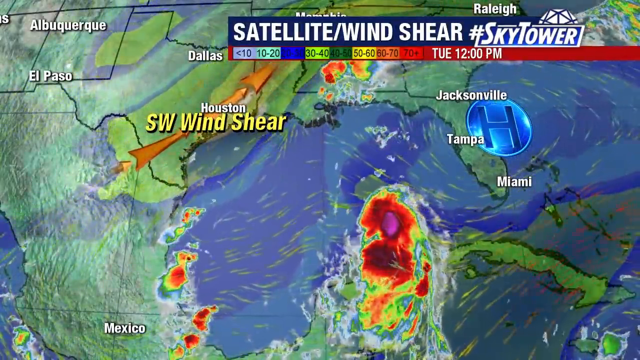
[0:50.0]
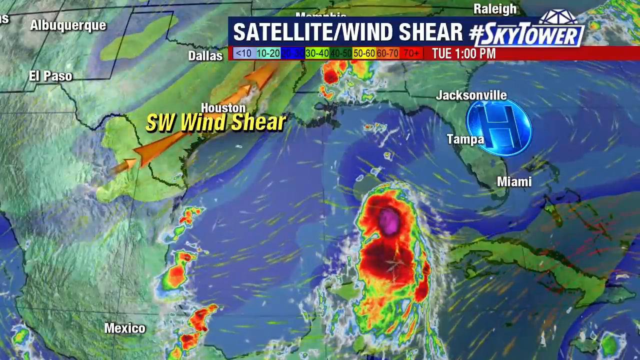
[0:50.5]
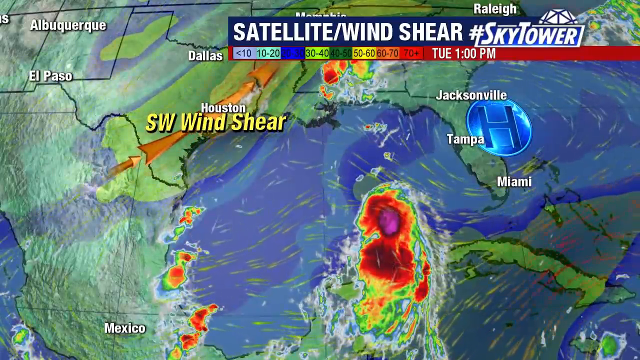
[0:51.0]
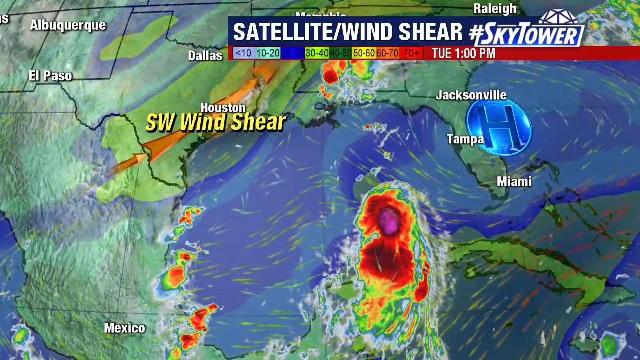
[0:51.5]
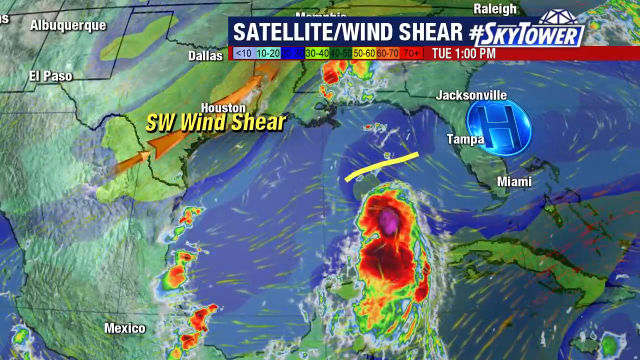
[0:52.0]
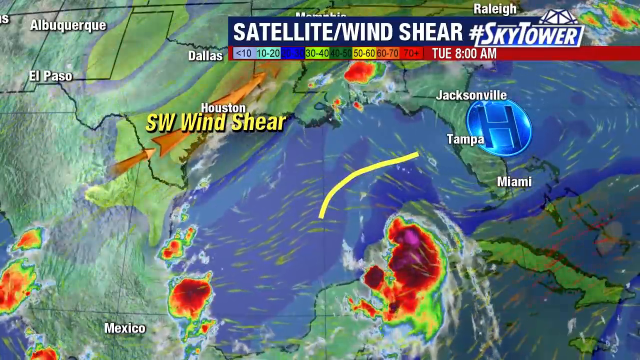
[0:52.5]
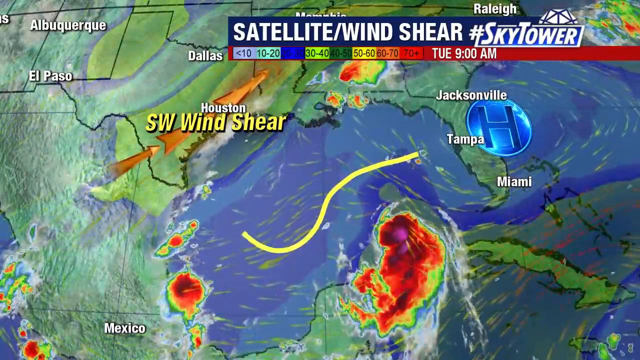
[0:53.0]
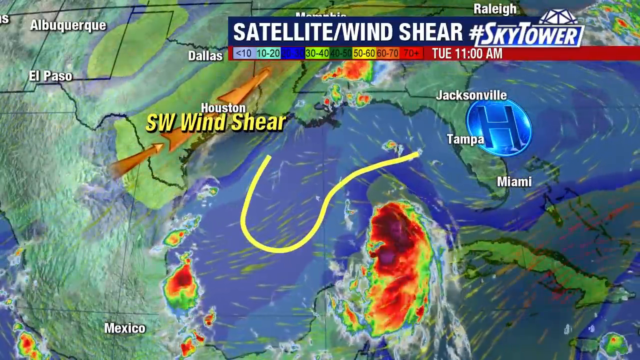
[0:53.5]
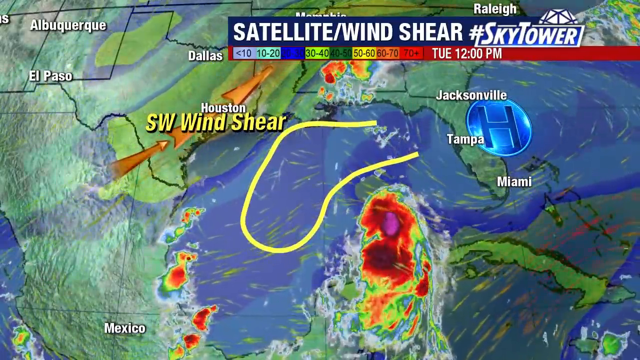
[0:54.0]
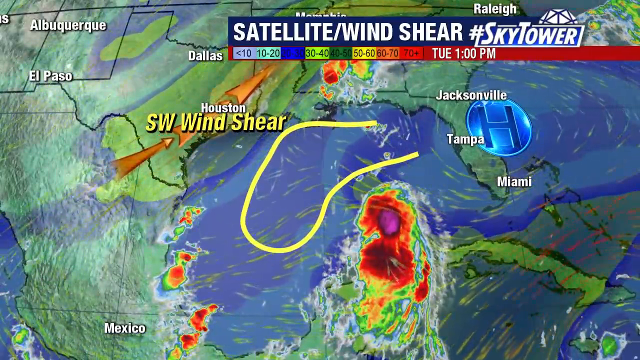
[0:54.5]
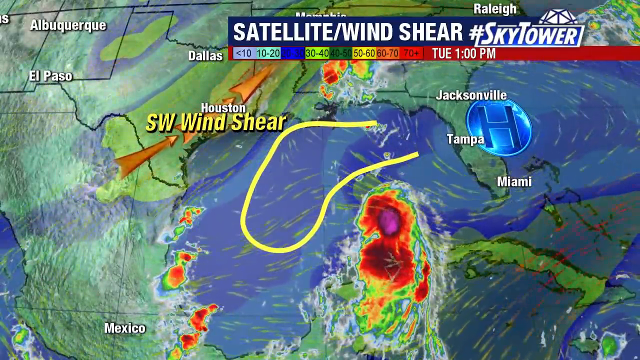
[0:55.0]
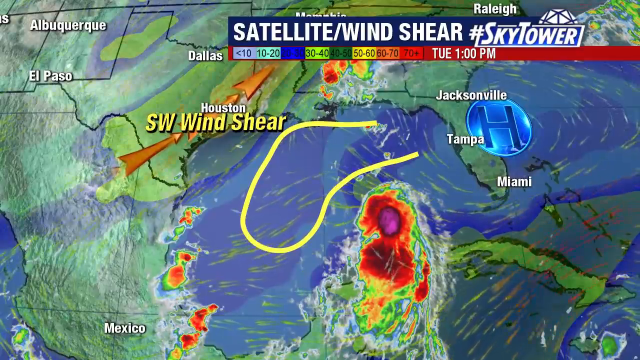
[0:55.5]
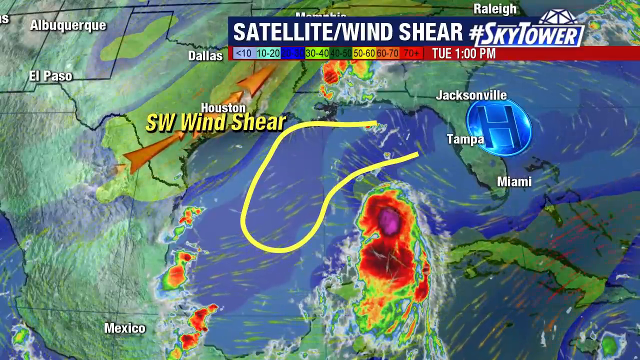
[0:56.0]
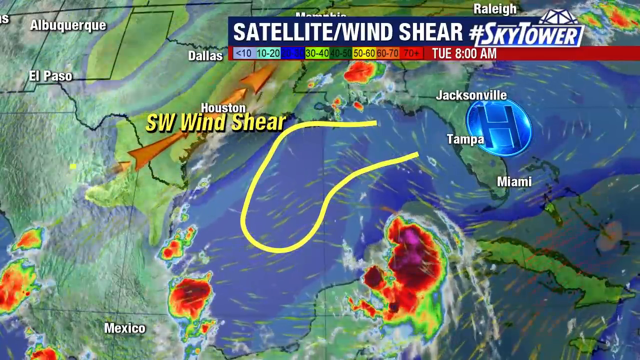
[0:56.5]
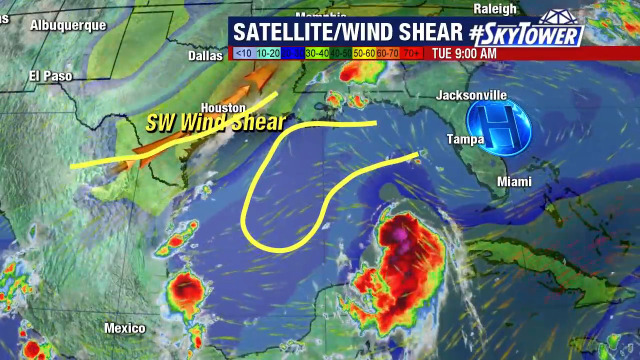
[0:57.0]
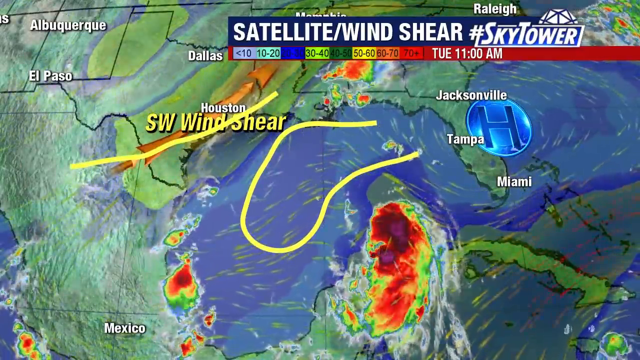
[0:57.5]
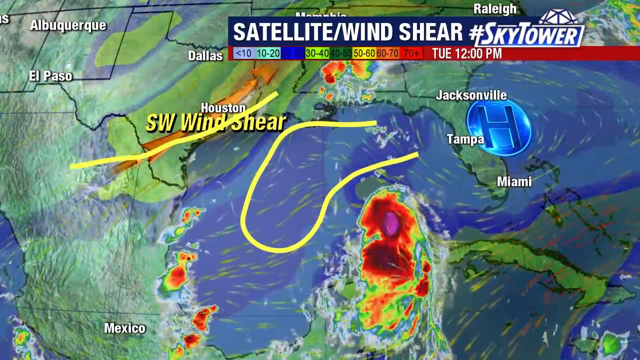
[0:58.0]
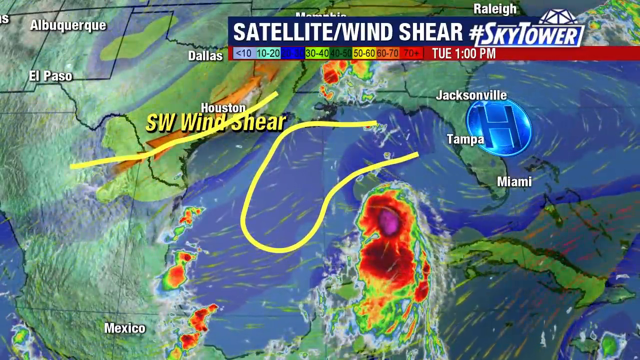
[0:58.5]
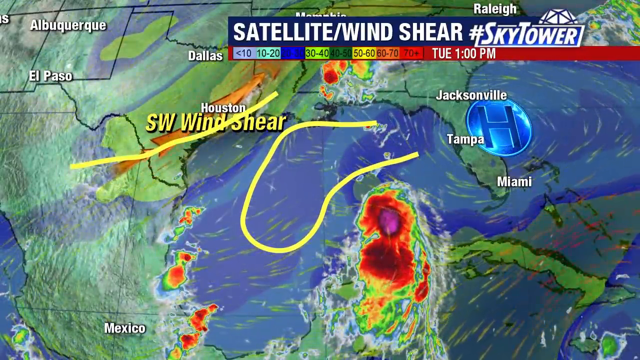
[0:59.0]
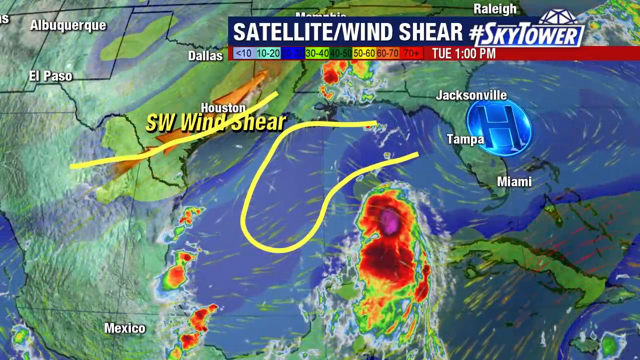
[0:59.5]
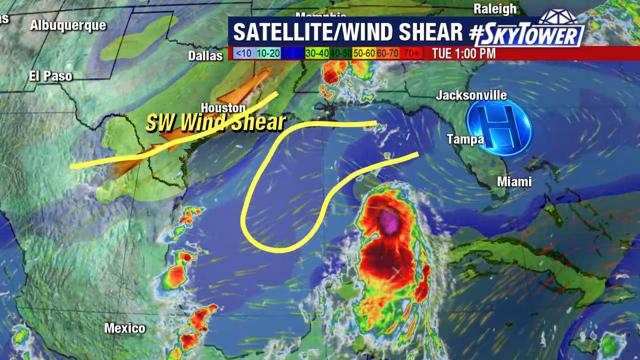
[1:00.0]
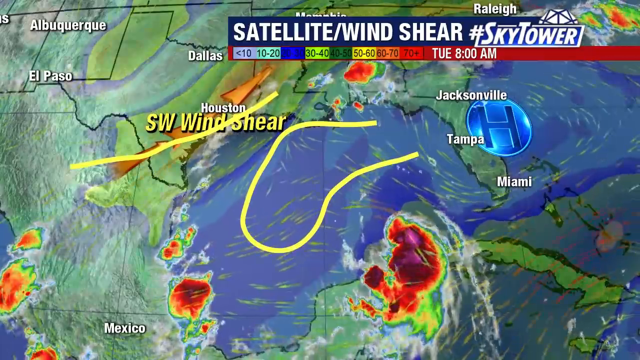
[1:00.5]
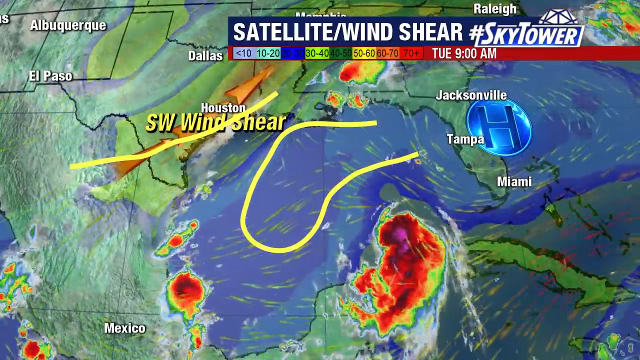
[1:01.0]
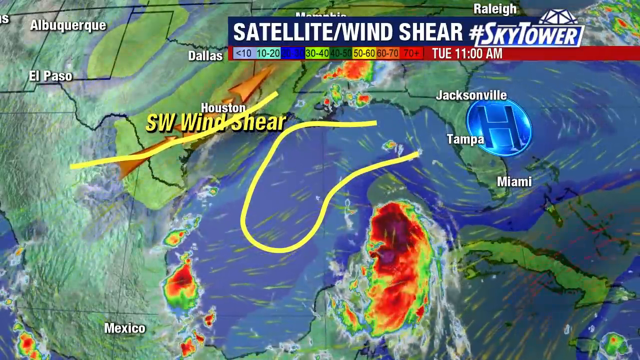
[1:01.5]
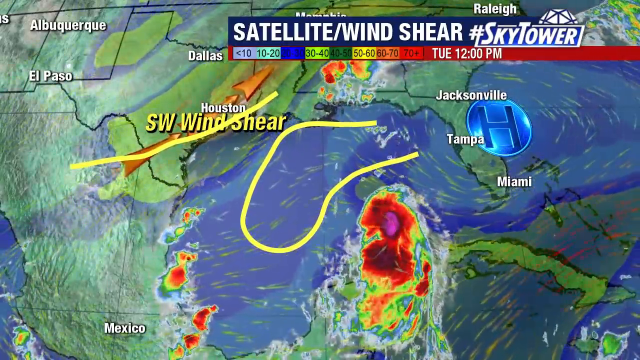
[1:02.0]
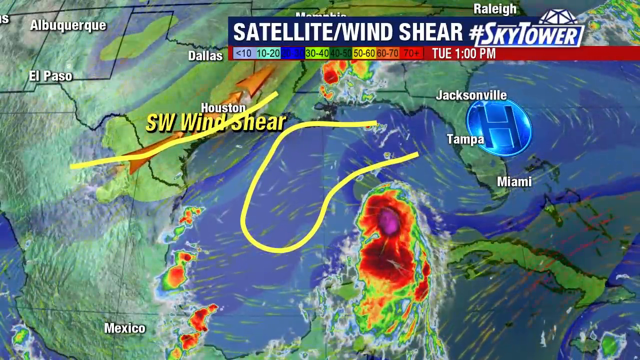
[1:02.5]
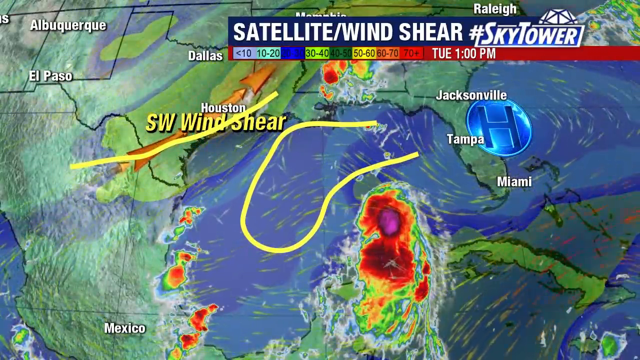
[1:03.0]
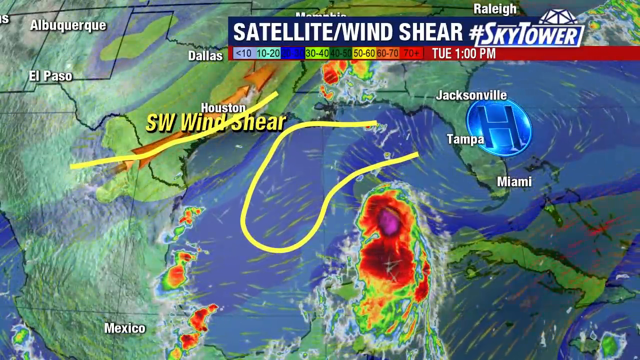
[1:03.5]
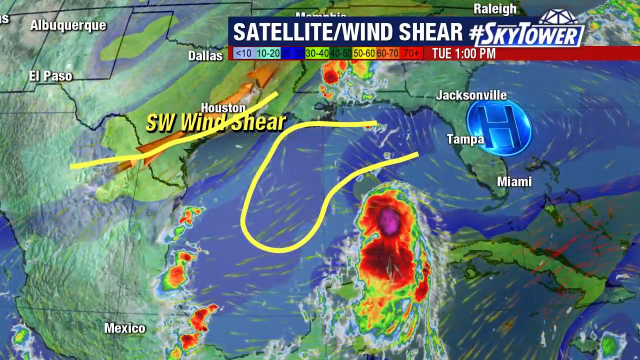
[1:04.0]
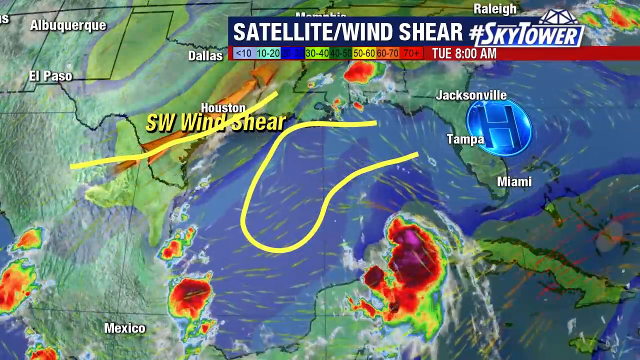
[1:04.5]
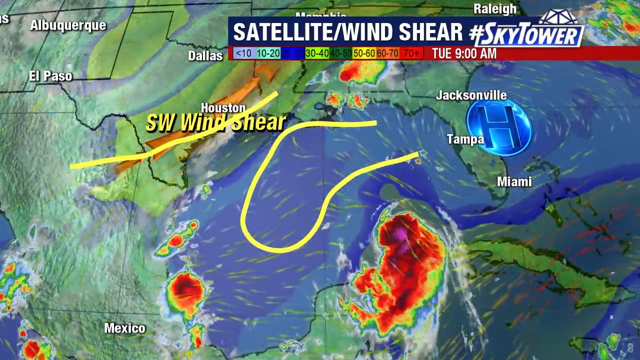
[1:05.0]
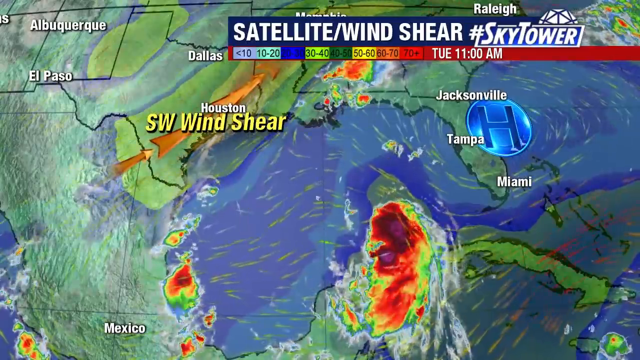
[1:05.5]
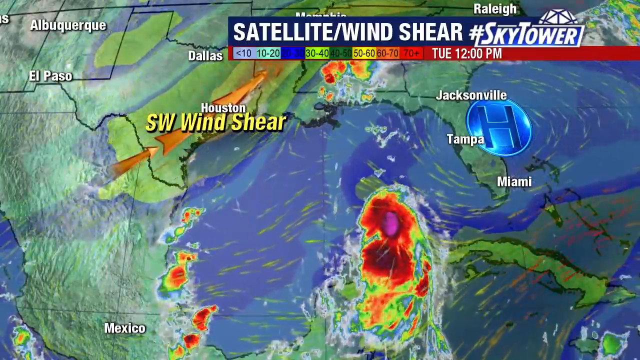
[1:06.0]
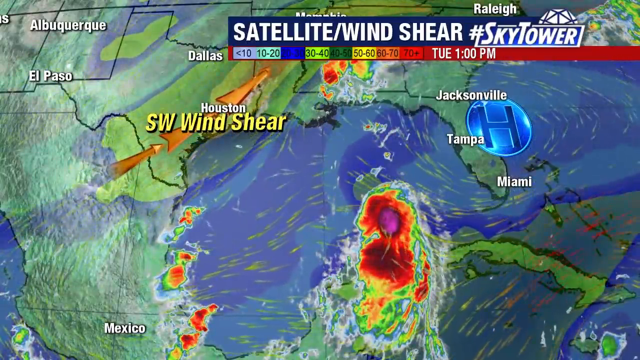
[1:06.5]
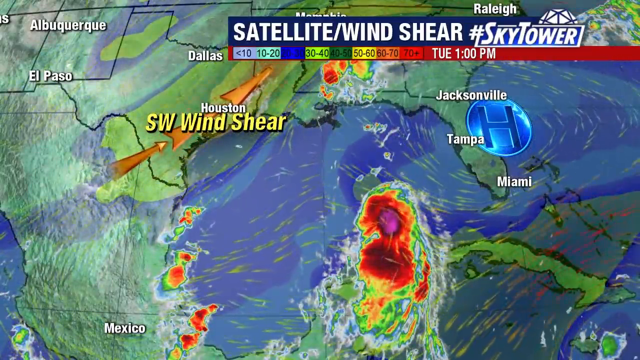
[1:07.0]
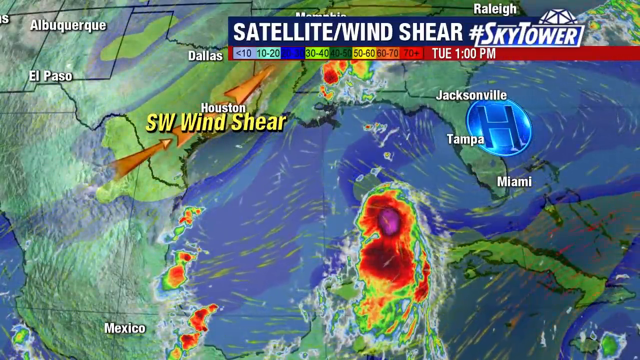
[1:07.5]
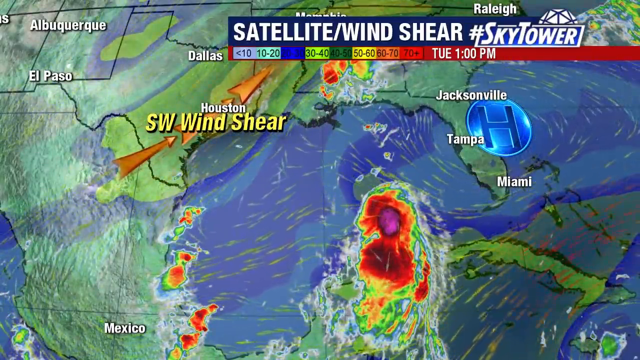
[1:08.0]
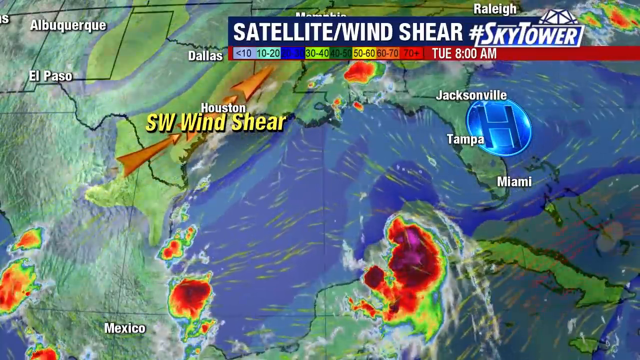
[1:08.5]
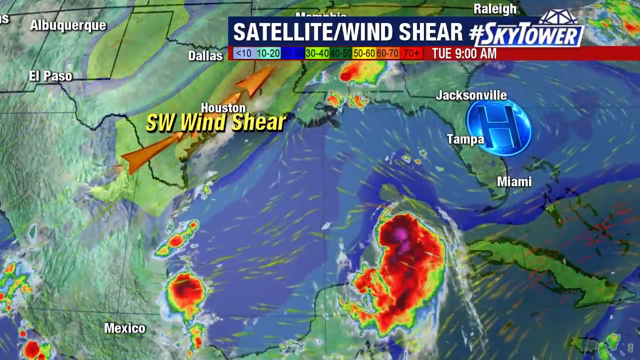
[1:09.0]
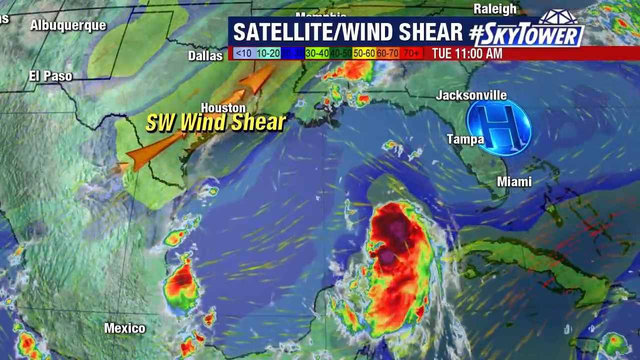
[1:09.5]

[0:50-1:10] The focus is on the wind shear. A high pressure area, marked with an "H", is over the Tampa area in Florida, and this may be what is keeping the storm away from Florida. The map steps through different times: Tuesday 9am, Tuesday 10am, Tuesday 11am, showing the area under Louisiana, from which the storm is kept away. The storm just keeps spinning around the coast of Mexico by Cancun and Cozumel. Some of the storm's winds are over 70 miles per hour, and the setup with this high pressure seems to be keeping the storm away from the continental United States at this point.